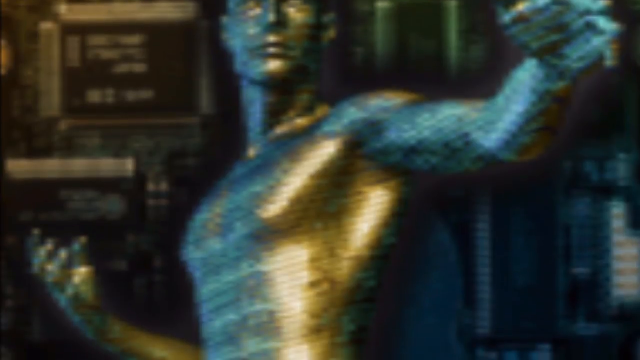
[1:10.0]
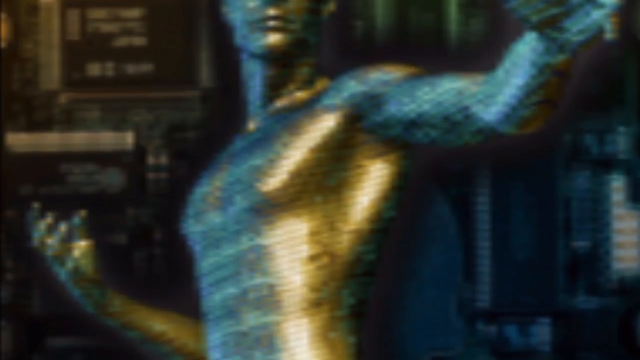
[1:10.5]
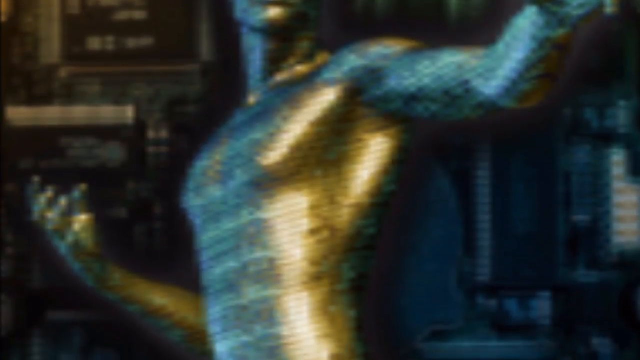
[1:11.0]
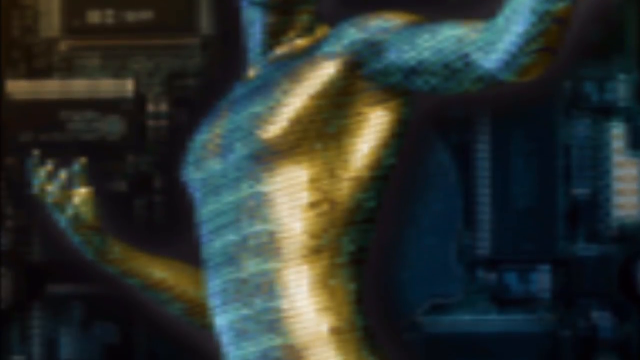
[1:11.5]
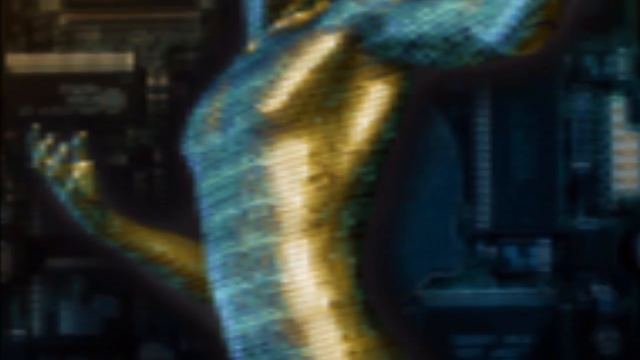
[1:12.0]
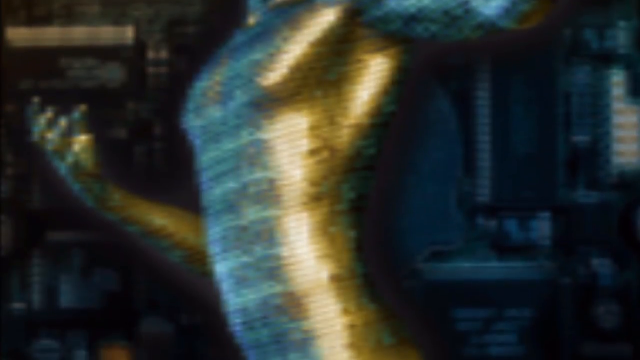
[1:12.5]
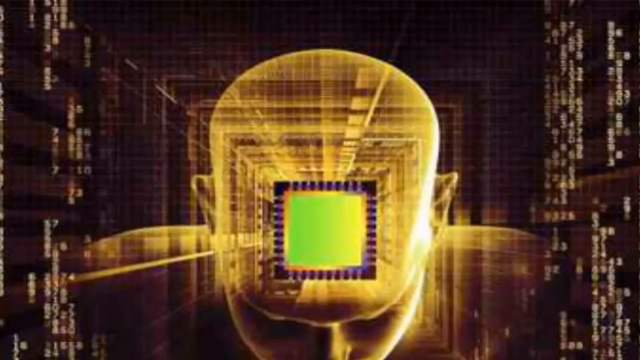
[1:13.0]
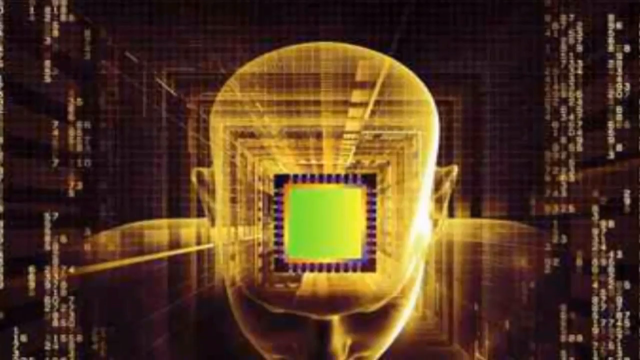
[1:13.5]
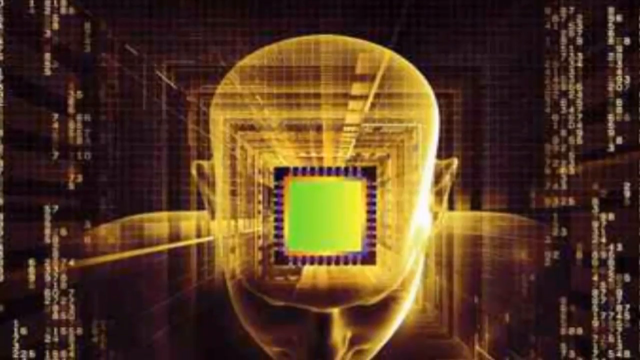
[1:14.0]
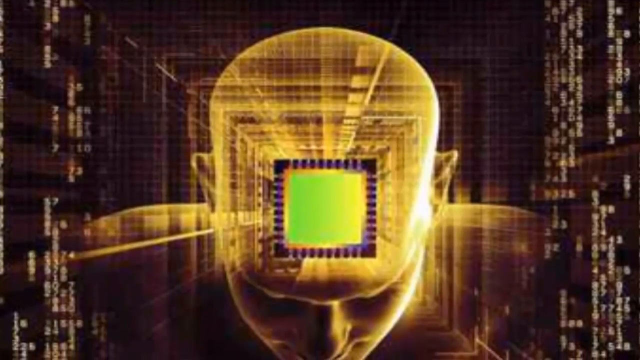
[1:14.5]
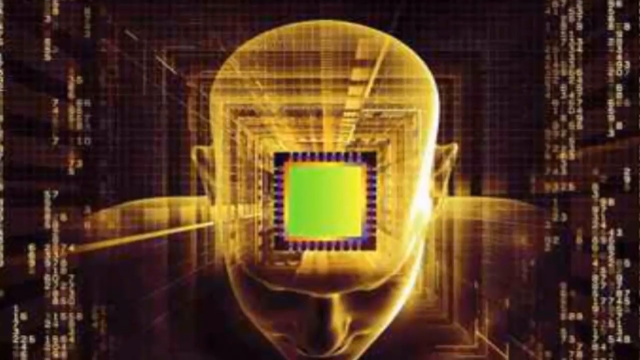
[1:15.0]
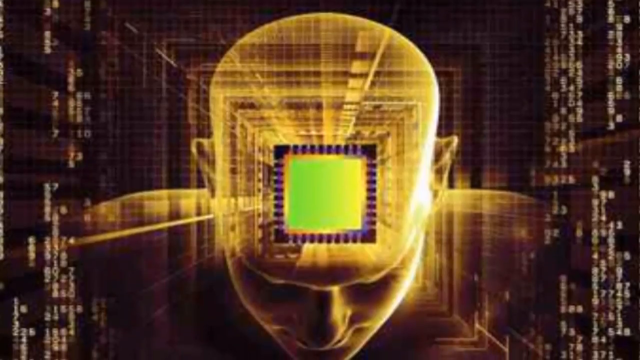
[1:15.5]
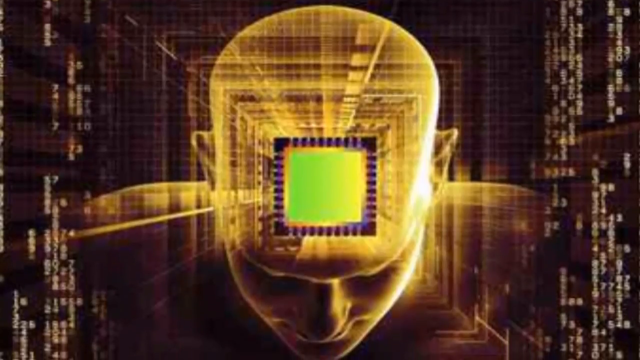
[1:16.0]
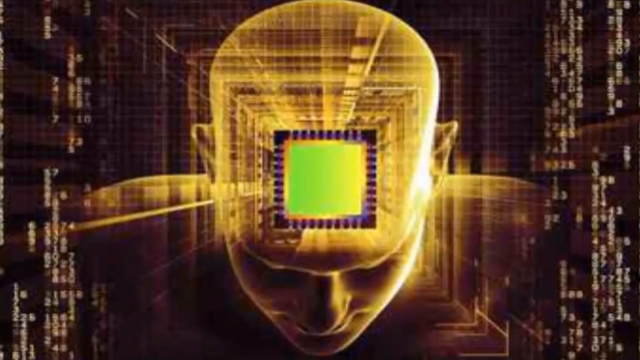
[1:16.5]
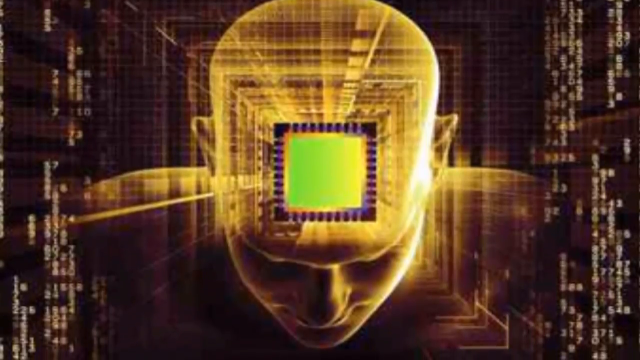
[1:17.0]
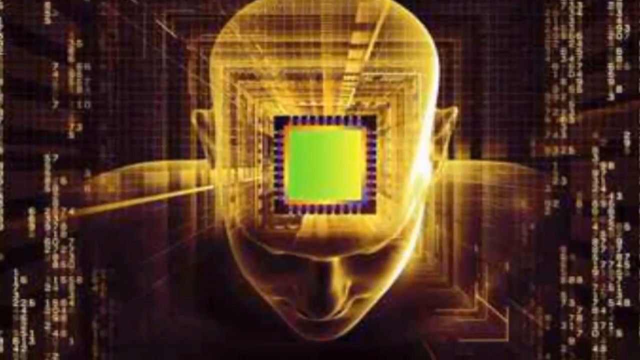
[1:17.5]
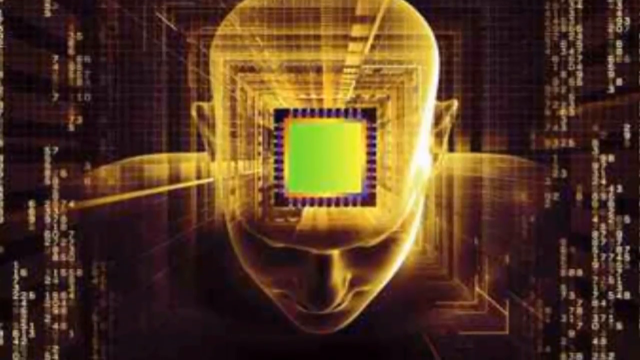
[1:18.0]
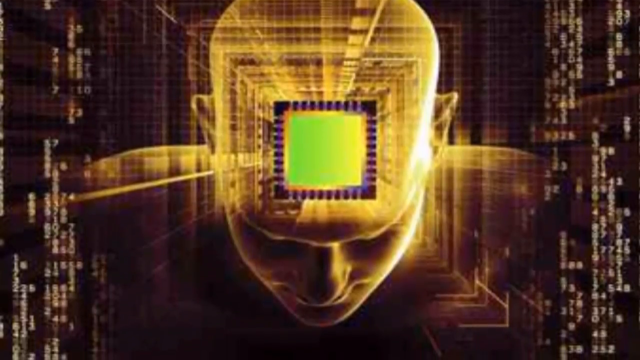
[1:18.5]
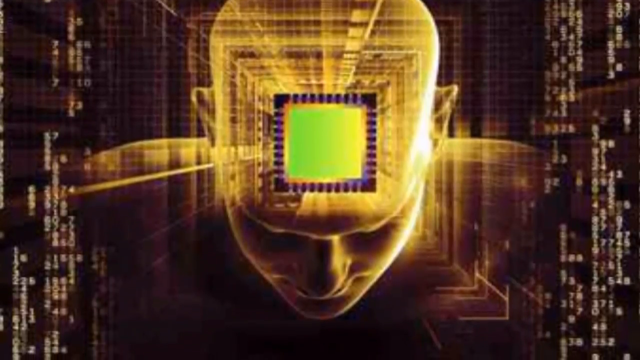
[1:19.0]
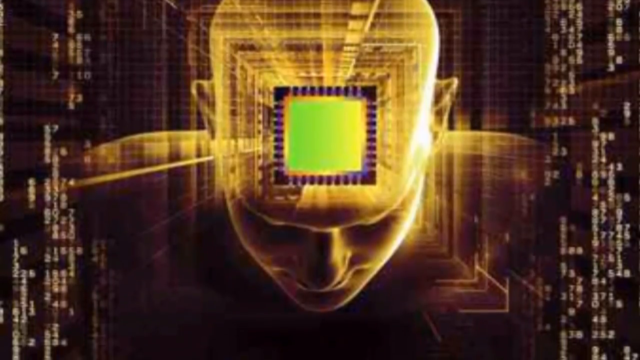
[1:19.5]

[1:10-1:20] The camera continues moving down the same statue, and when it reaches the statue's waistline a new image appears: the top of a person's head with a square cutout marked with purple and black slotted lines, with green and yellow color inside the square. The person is holographic and gold, and the background is mostly dark. The person is looking downward, and as the camera moves down, part of the person's face is seen from that downward angle.